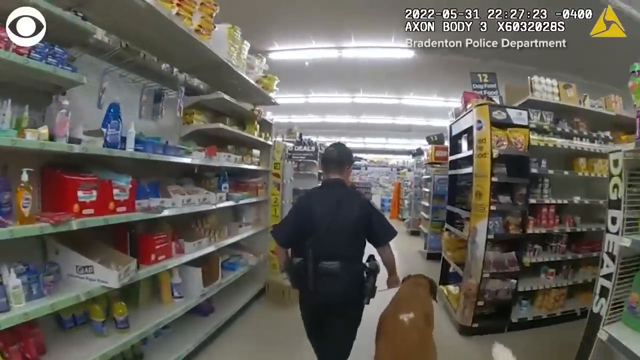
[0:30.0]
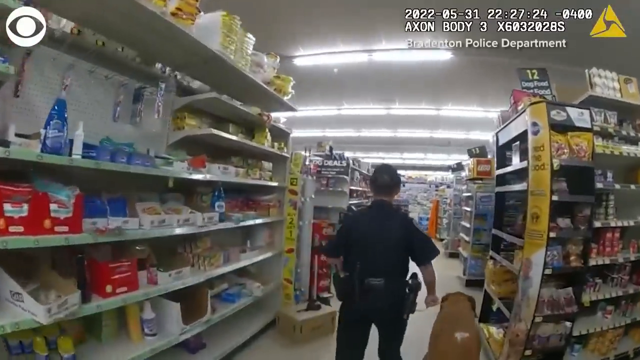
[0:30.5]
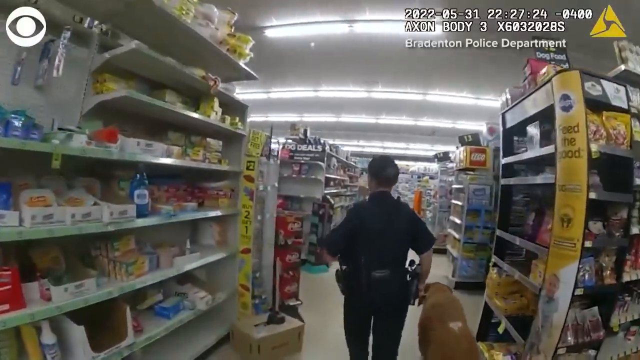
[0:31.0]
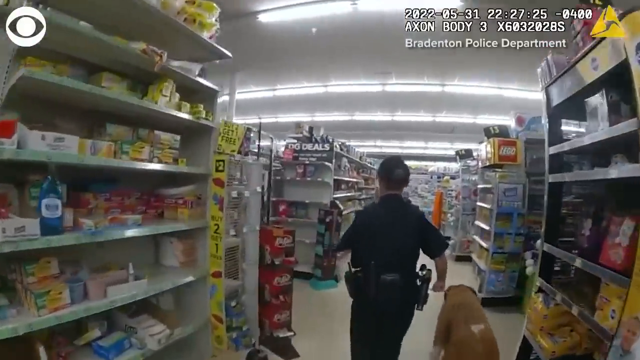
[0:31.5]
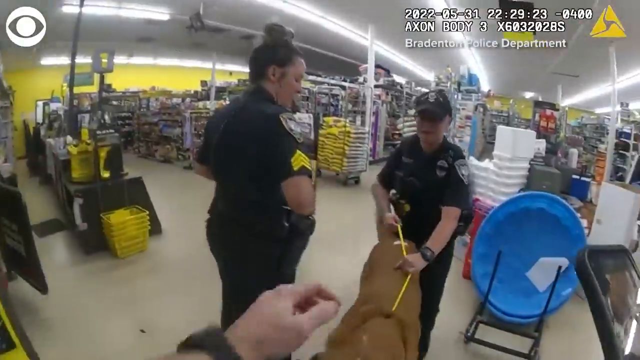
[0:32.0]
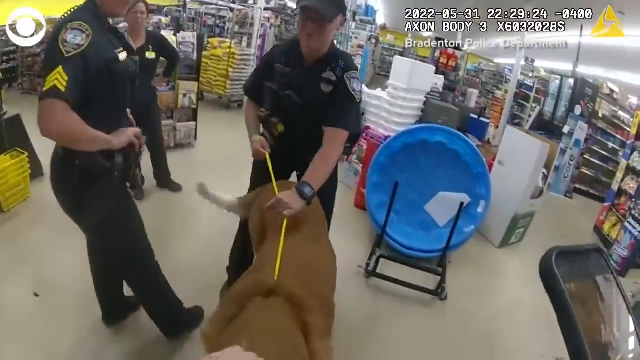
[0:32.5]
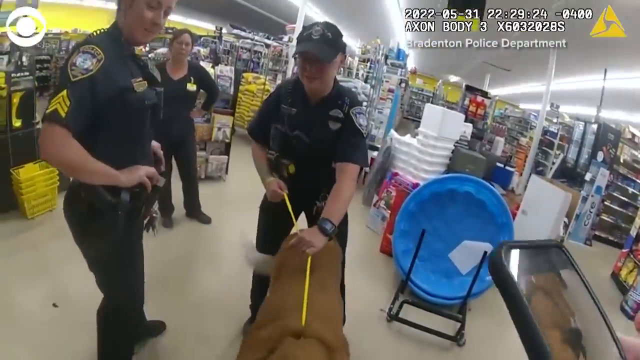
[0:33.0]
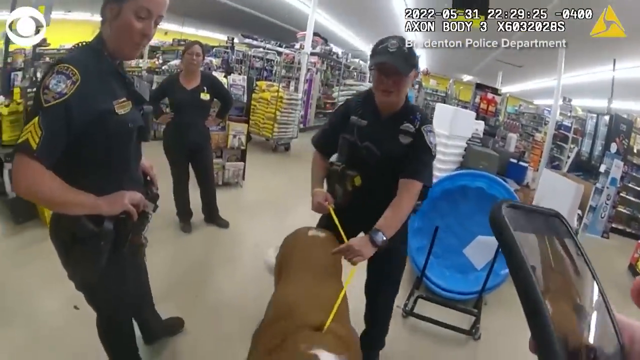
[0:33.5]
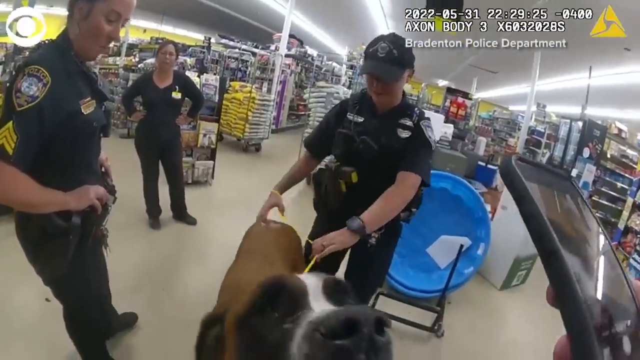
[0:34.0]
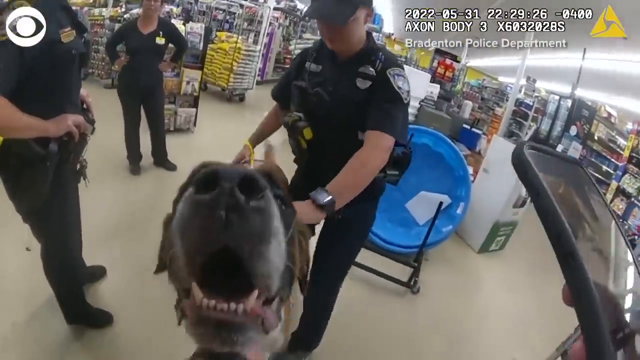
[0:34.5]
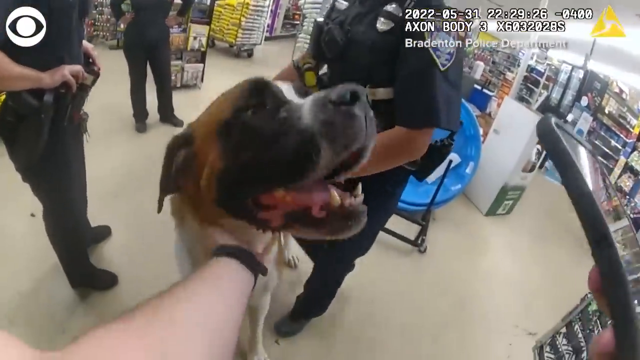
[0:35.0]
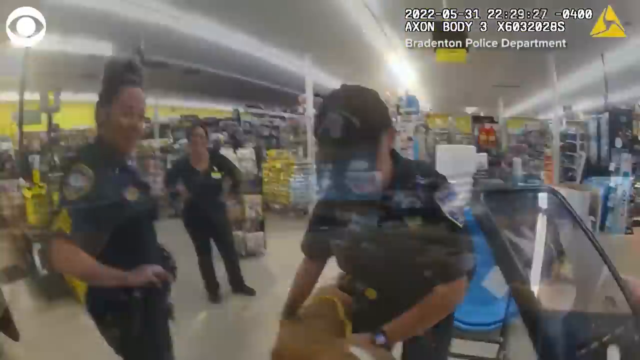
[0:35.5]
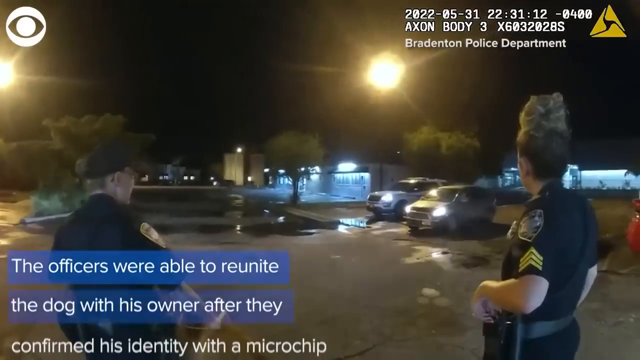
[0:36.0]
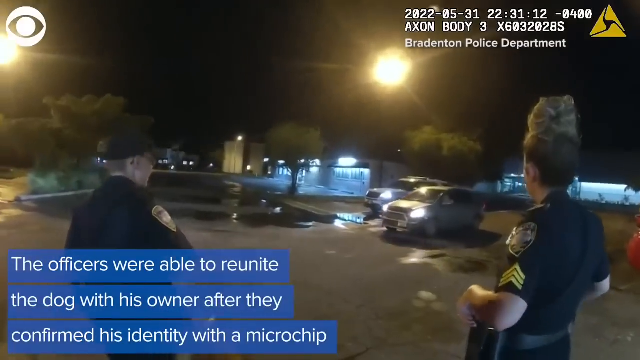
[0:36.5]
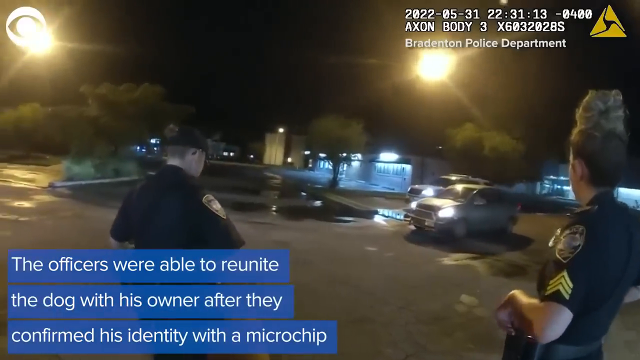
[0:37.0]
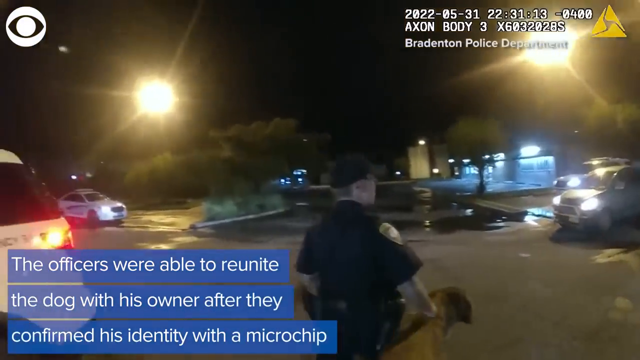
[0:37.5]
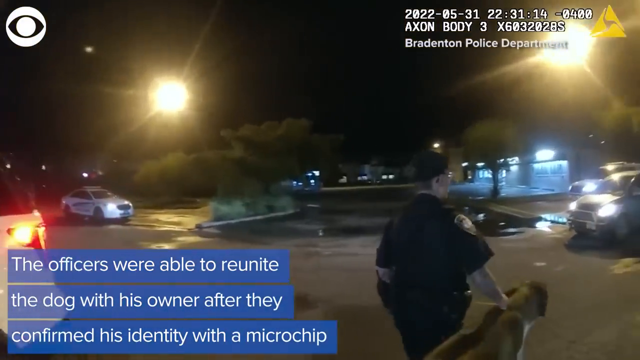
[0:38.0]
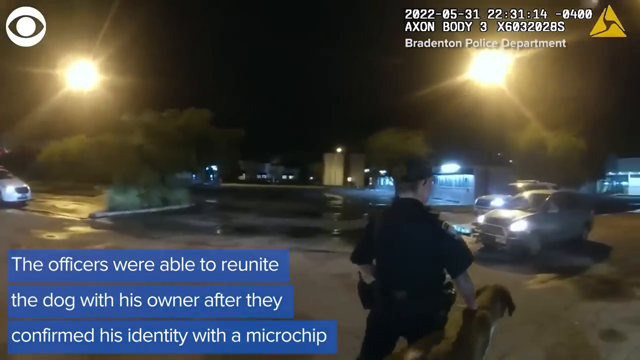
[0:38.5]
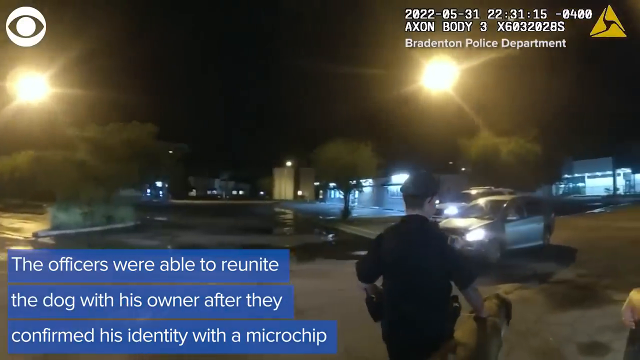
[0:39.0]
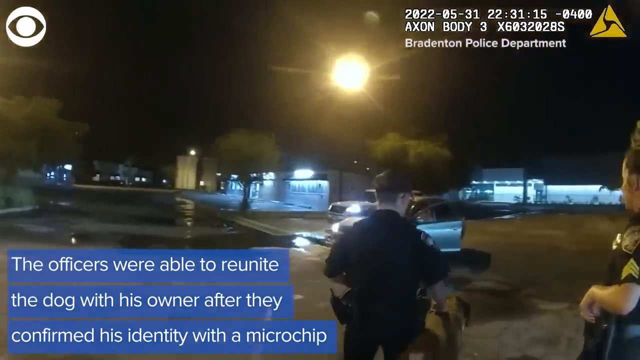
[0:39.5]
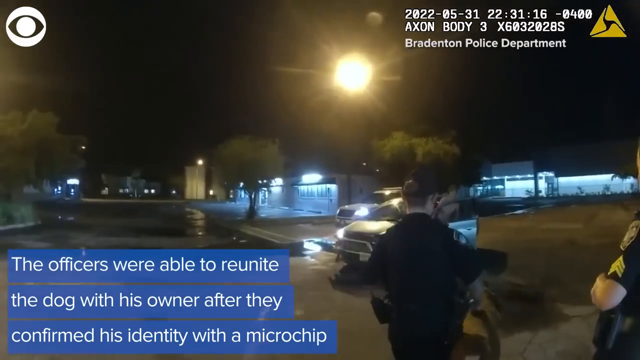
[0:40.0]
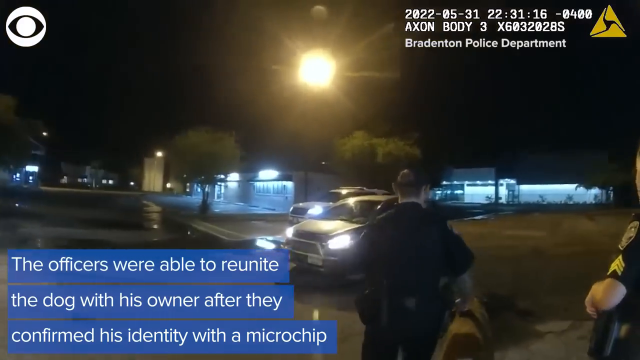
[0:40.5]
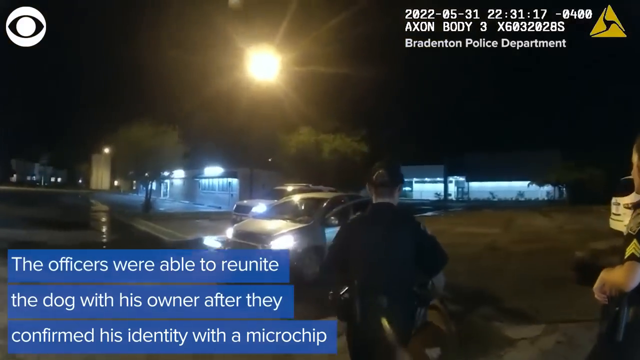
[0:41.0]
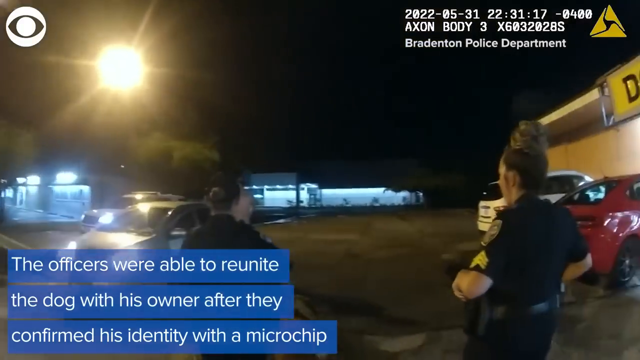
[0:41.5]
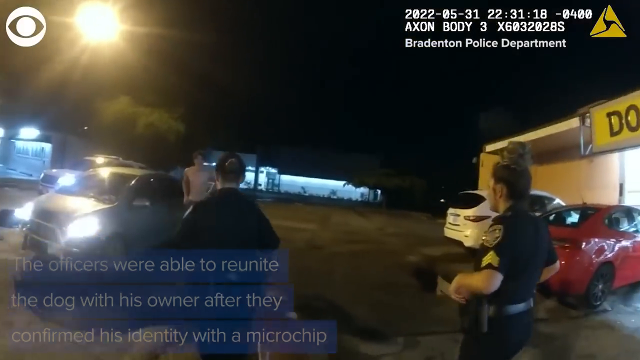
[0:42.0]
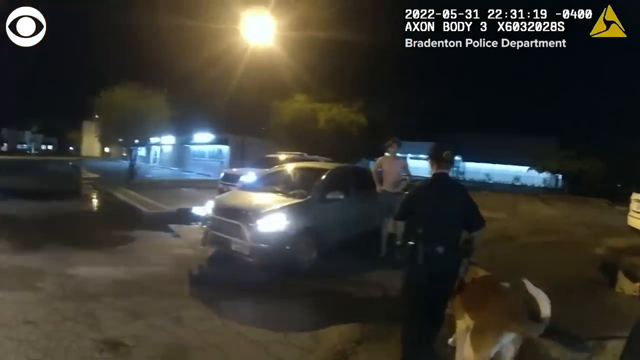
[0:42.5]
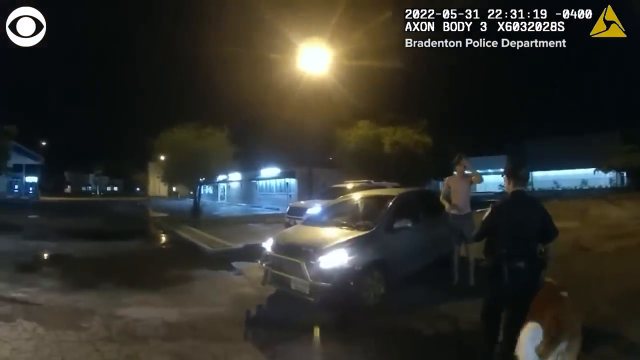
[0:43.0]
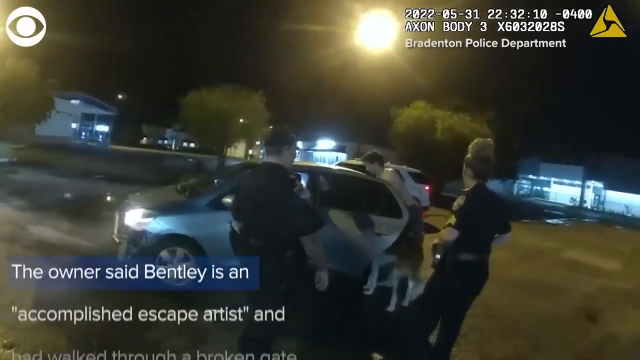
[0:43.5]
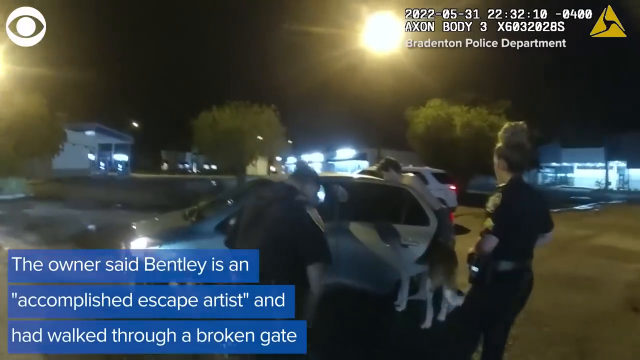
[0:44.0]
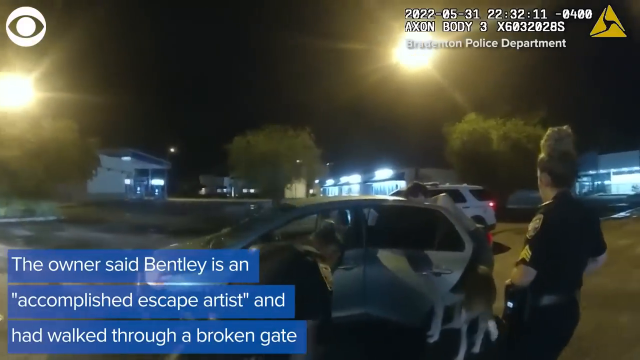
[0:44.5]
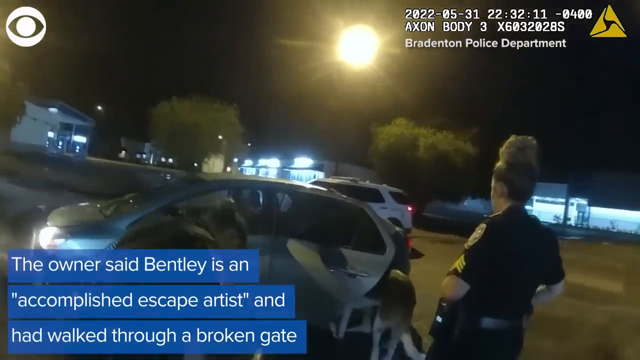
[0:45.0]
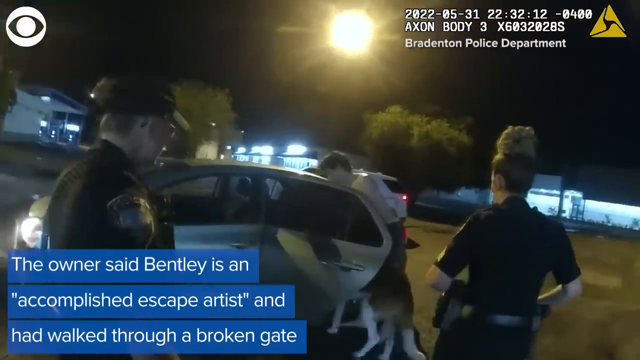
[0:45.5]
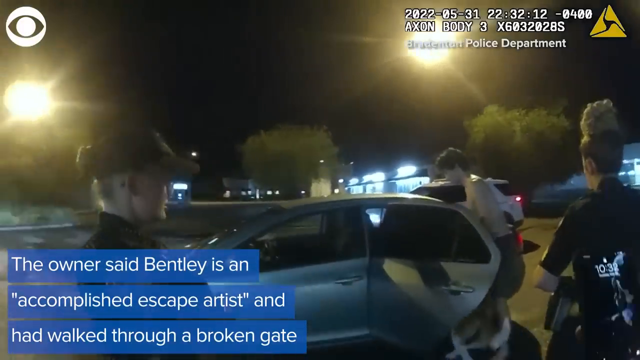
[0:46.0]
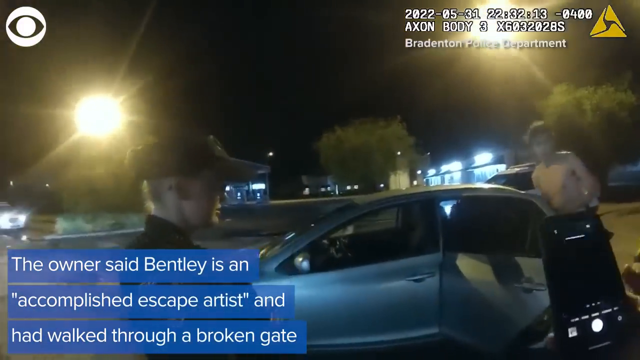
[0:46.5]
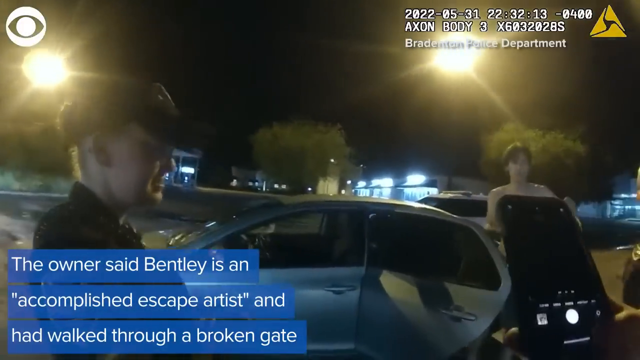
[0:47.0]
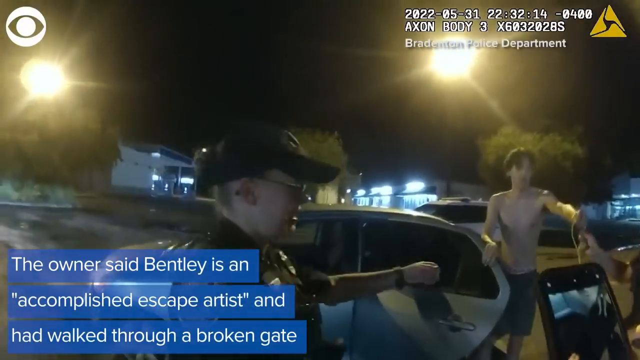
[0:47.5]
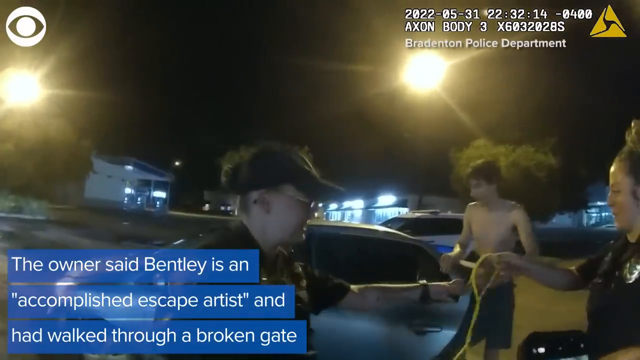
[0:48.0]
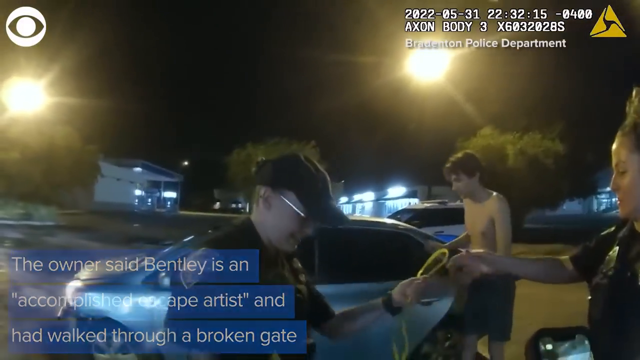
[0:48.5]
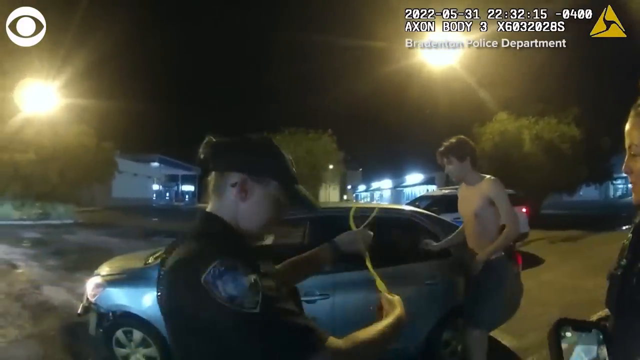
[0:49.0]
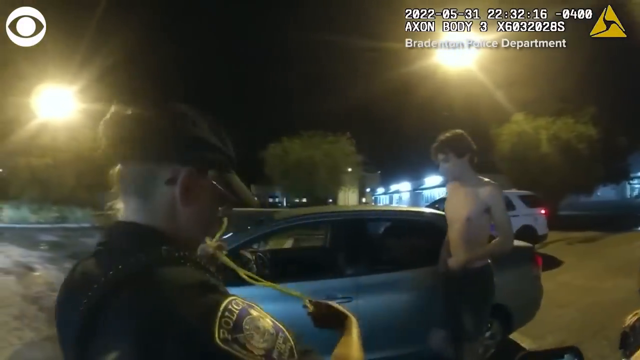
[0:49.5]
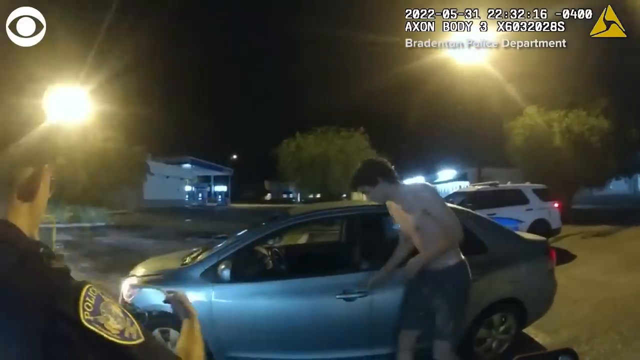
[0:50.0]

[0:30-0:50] The body cam now shows two police officers outside at night, standing in the parking lot of the Family Dollar store, in addition to the officer wearing the body cam. There appear to be puddles of water on the ground, as if it has just finished raining. The date stamp is in the top right corner of the footage, with the Bradenton Police Department identified, and the CBS eye is in the top left corner. After the dog has been taken out of the store, its owner pulls into the parking lot of the Dollar General store in his car and puts the 135-pound St. Bernard into the back of the car.